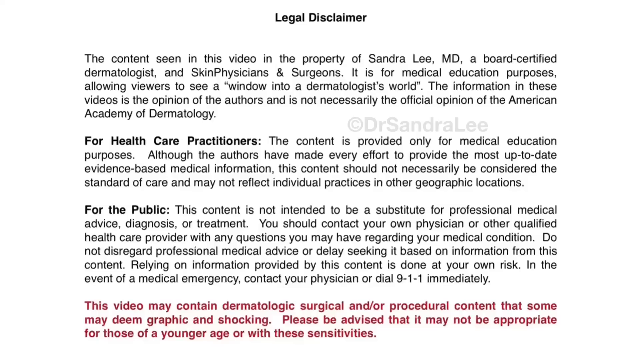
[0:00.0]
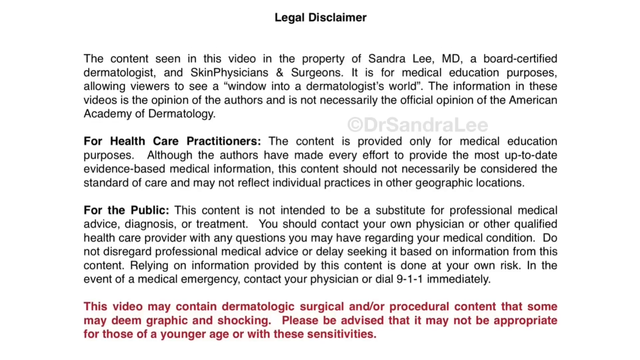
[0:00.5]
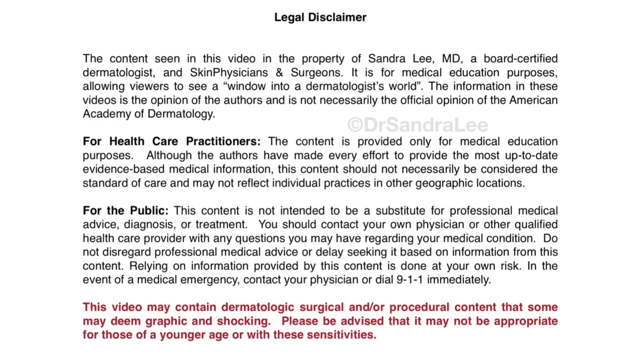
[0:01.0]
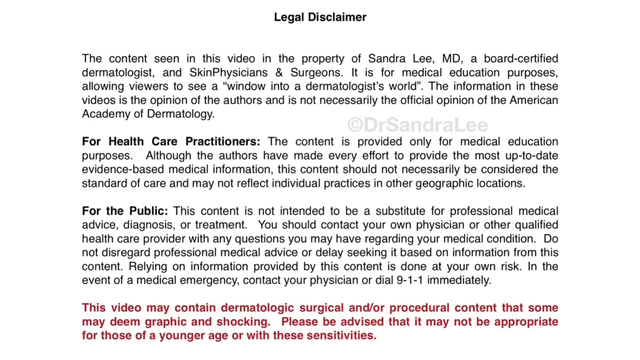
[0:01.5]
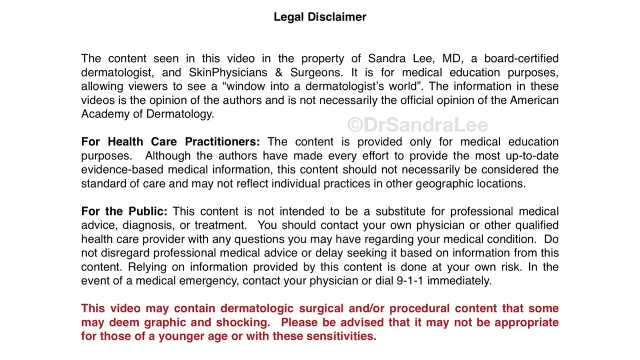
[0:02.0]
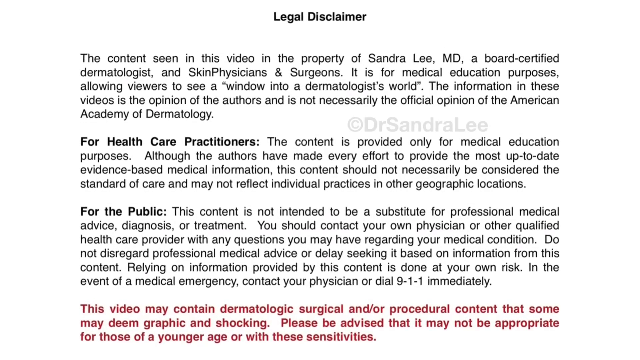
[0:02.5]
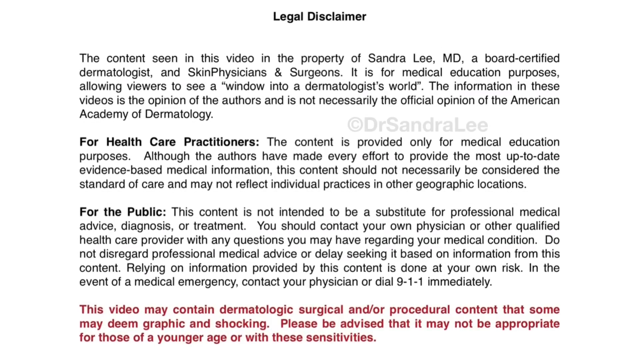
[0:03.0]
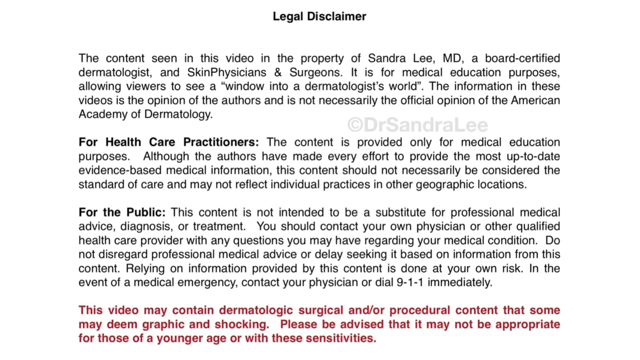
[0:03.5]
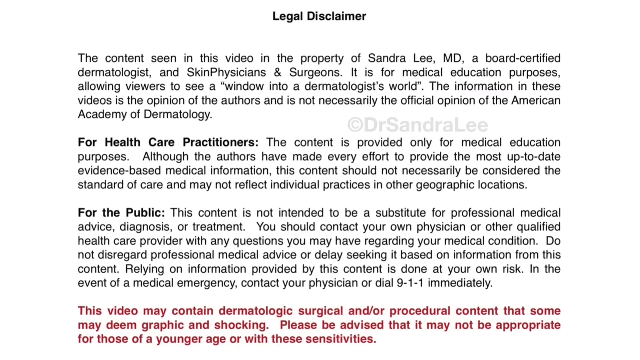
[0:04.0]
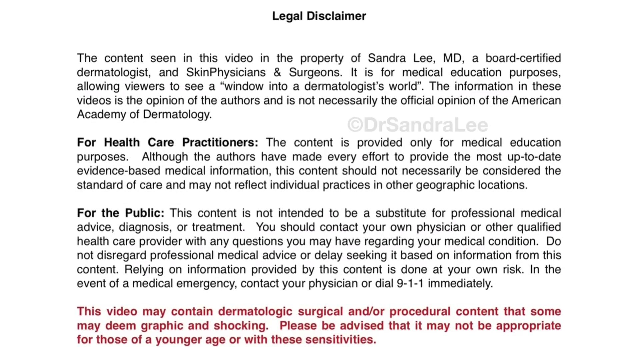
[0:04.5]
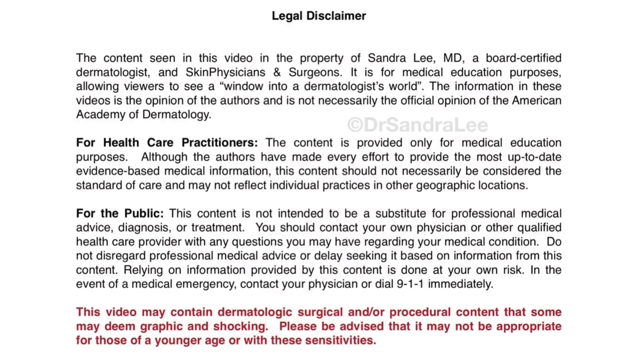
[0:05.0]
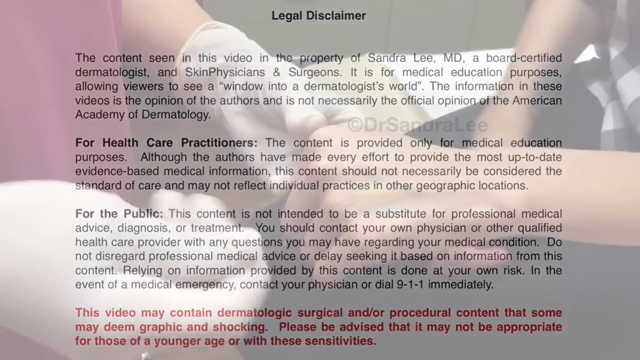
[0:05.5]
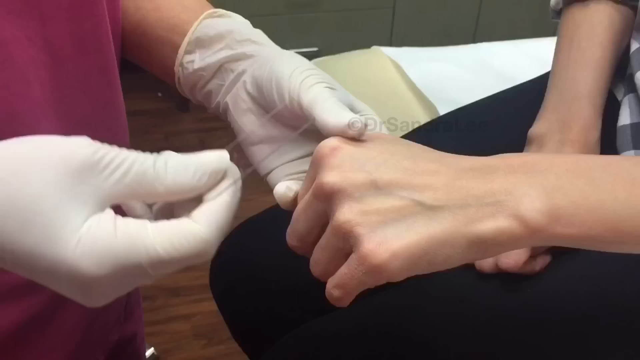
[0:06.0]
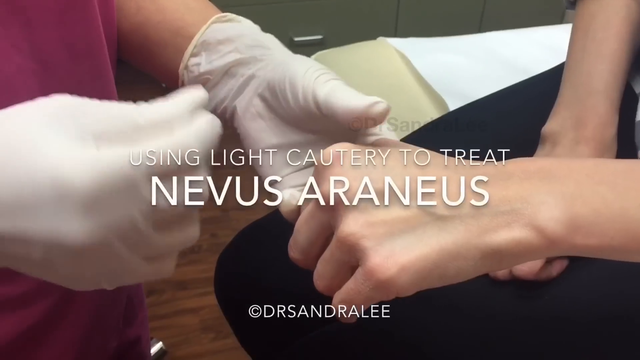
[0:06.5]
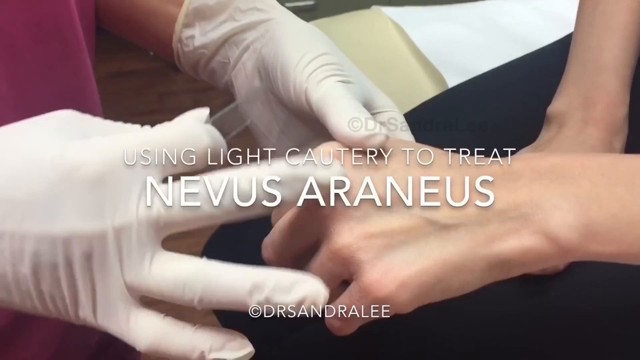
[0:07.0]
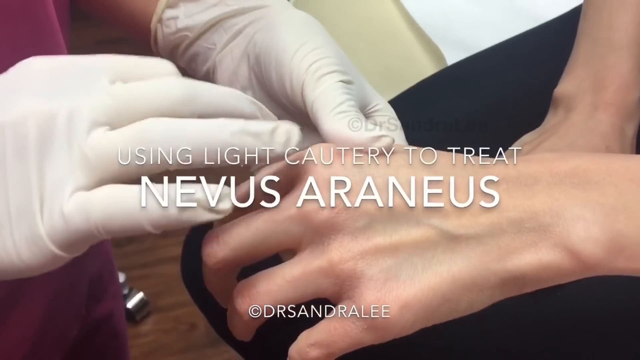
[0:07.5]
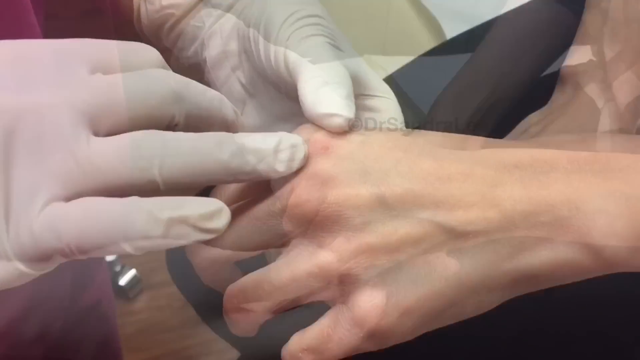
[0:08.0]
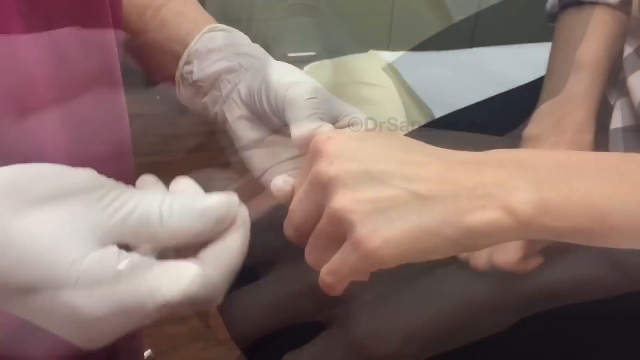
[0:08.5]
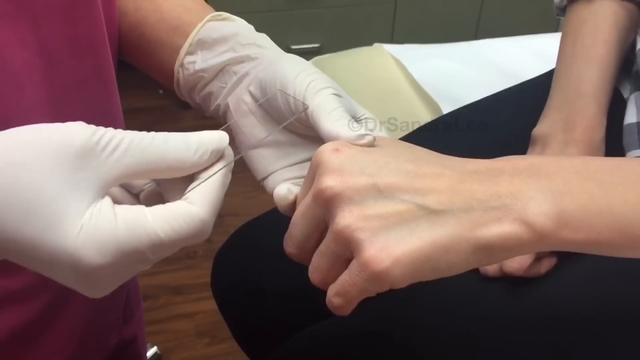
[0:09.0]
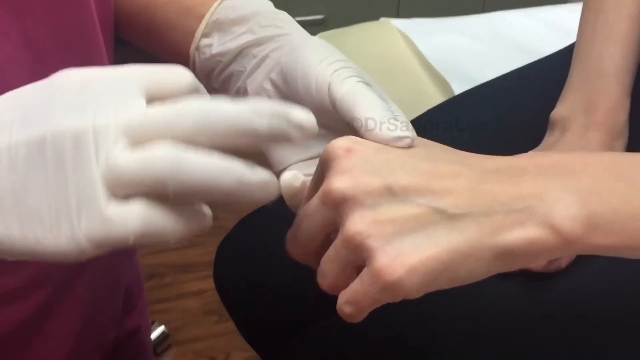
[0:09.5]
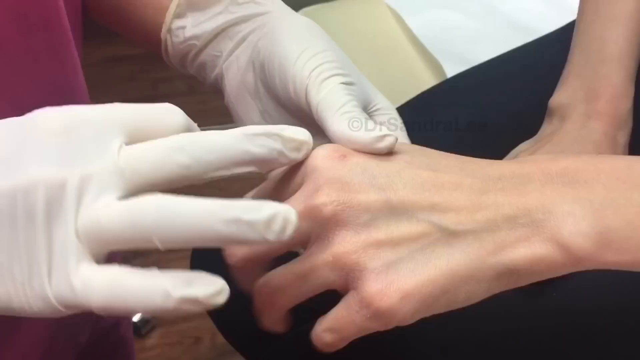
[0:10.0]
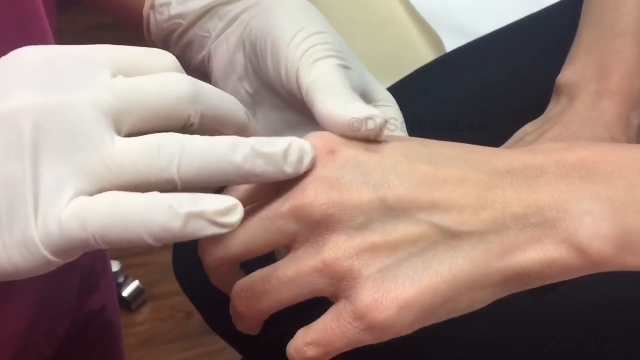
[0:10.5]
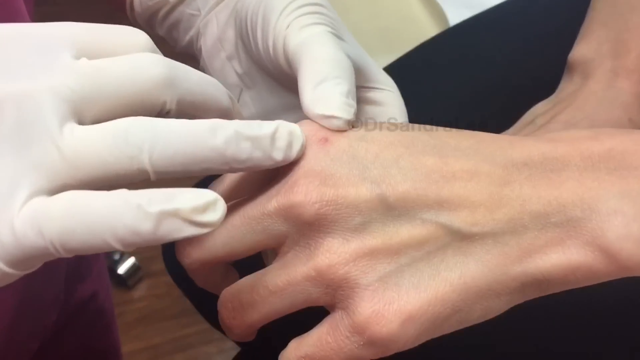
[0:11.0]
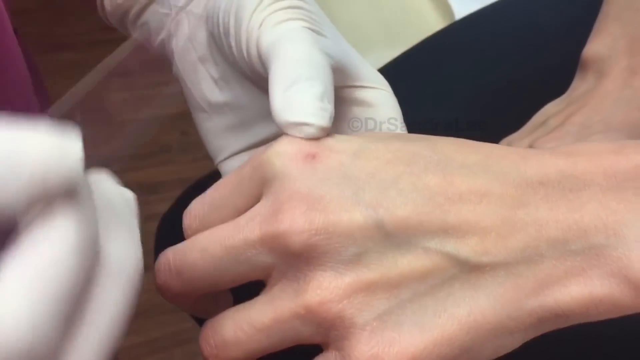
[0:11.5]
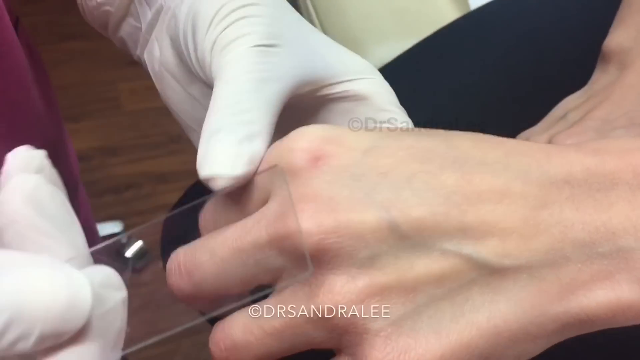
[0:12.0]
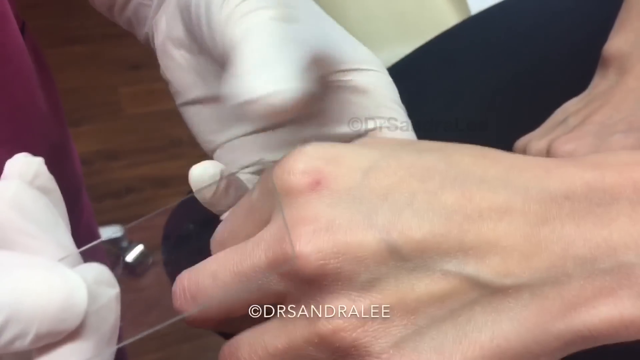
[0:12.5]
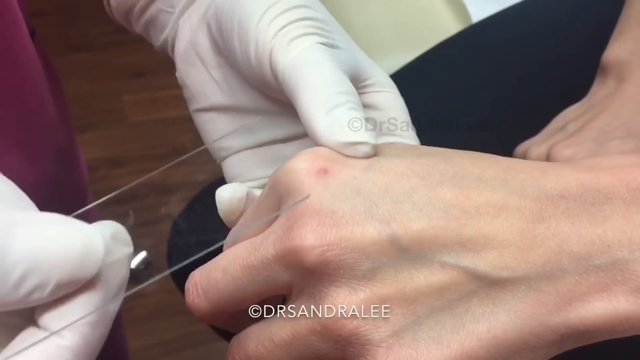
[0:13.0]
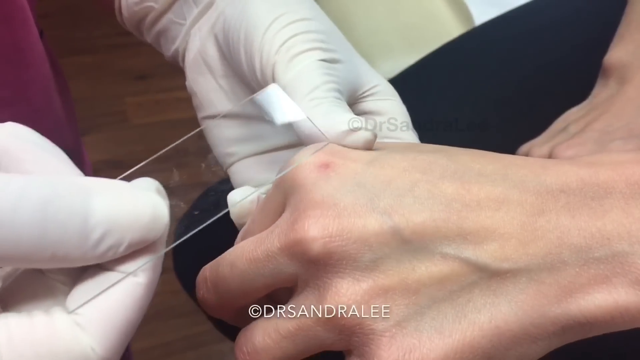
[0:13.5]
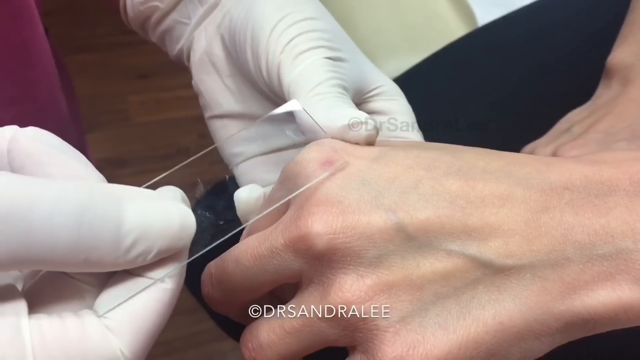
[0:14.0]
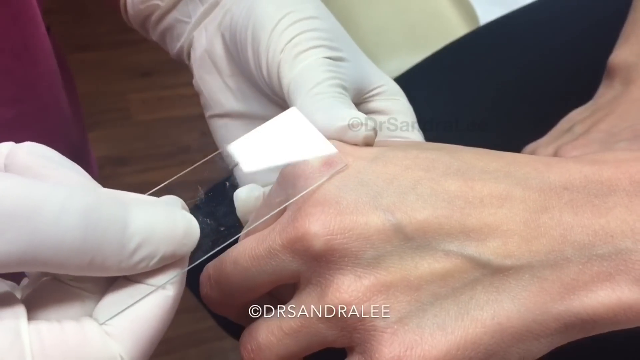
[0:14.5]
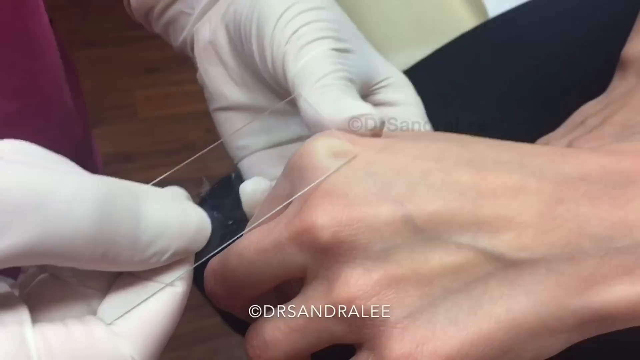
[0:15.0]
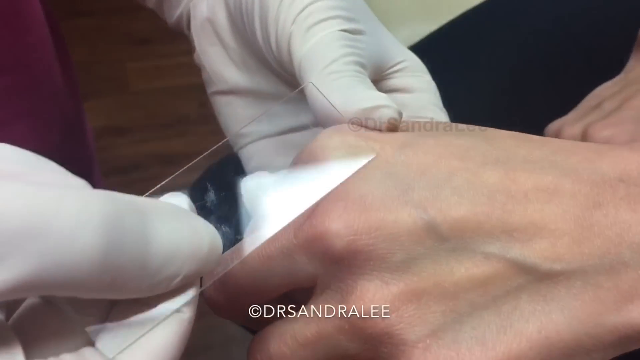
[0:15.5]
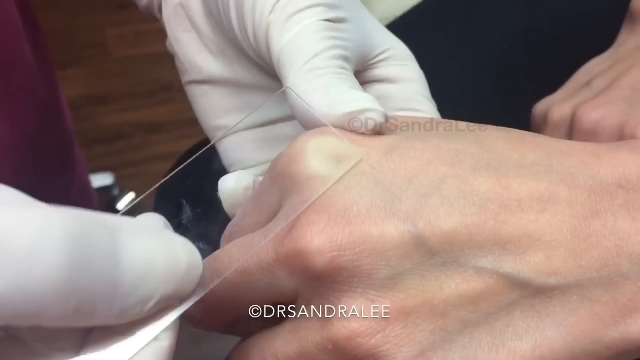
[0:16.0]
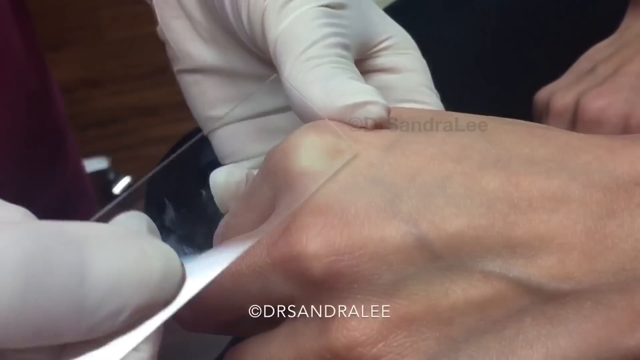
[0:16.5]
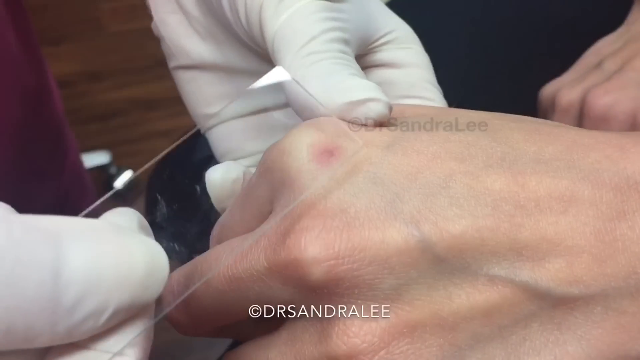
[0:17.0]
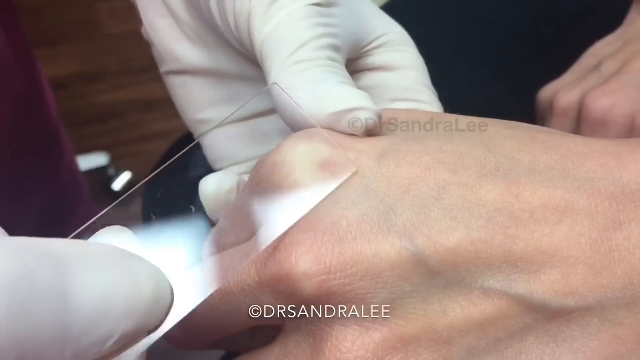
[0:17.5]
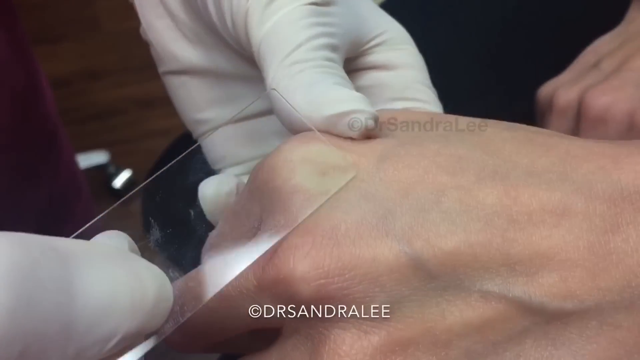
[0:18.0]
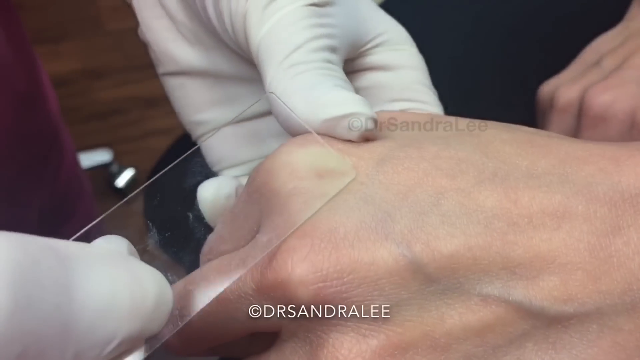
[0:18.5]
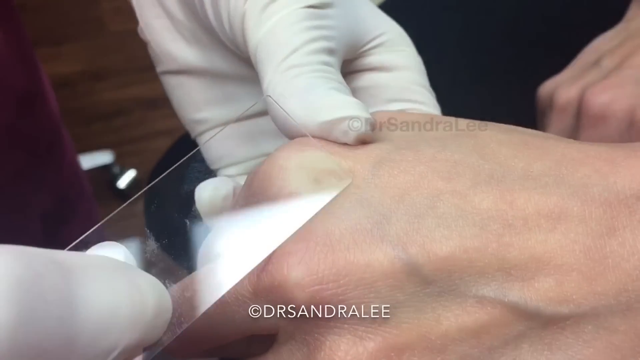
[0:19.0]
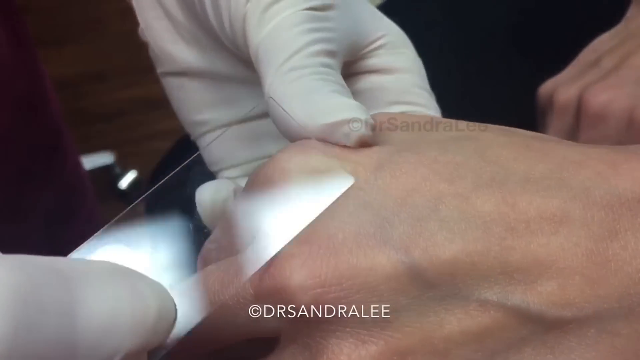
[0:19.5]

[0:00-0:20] A legal disclaimer appears on screen, stating that it is for healthcare practitioners and for the public. Next, a health care worker holds somebody's hand as if about to put in an IV, and text reads "using light cautery to treat nevus araneus." The health care worker, wearing pink scrubs and blue gloves, appears to place what looks like a microscope slide over an area of the hand and pushes down on it. Neither the health care worker's face nor the patient's face is visible, but judging by the clothes, the patient appears to be male. She is working on his hand.